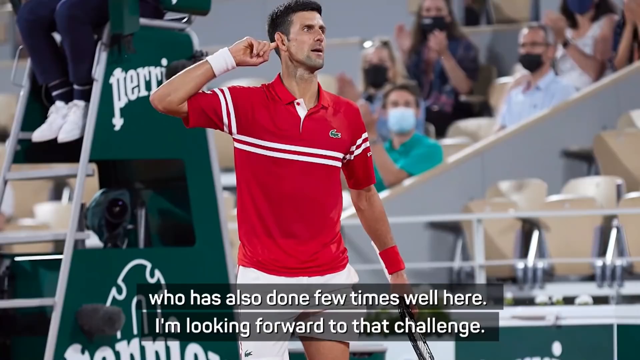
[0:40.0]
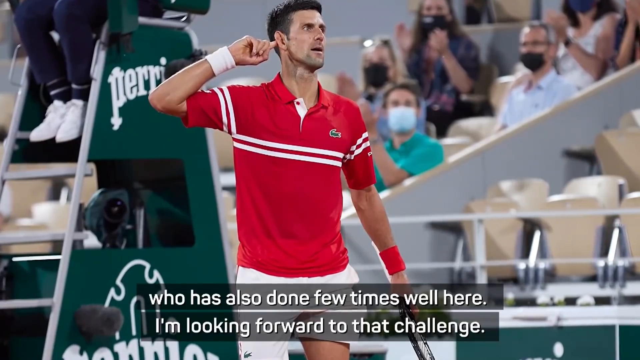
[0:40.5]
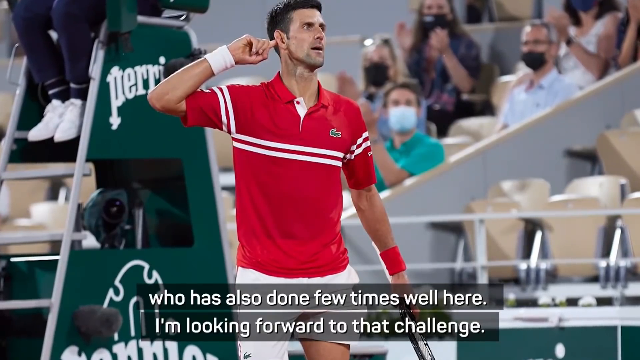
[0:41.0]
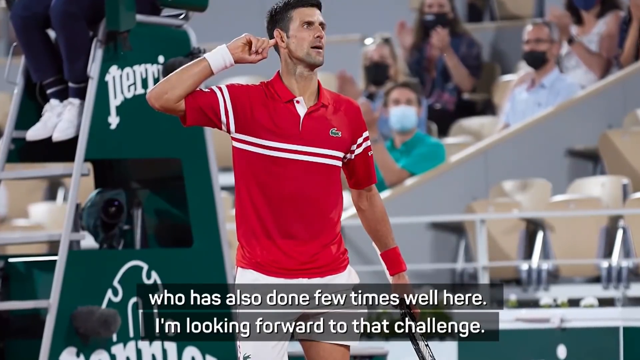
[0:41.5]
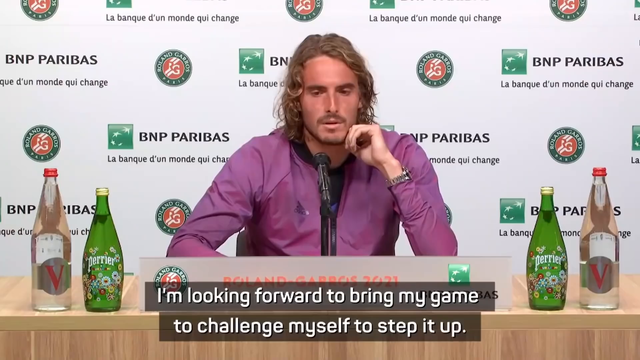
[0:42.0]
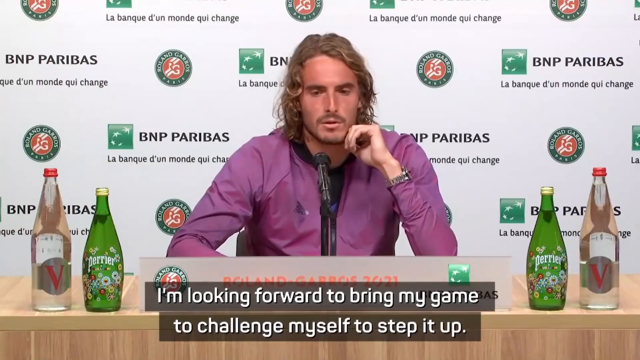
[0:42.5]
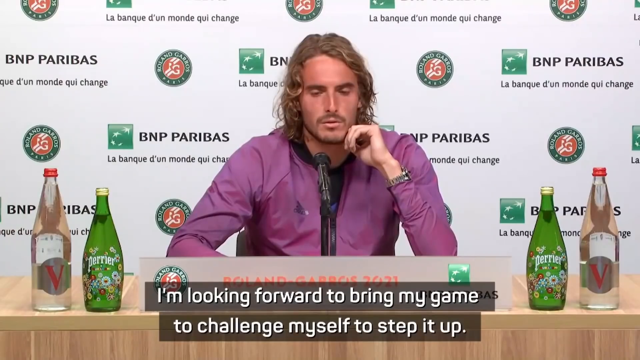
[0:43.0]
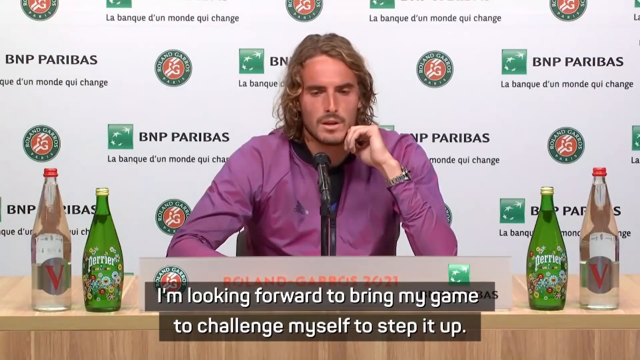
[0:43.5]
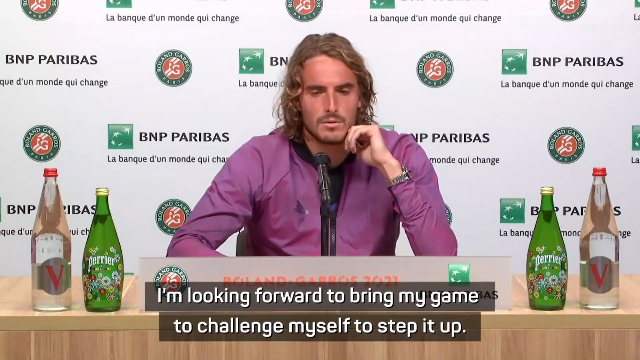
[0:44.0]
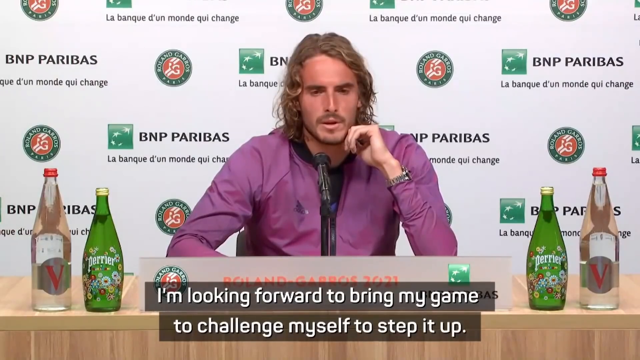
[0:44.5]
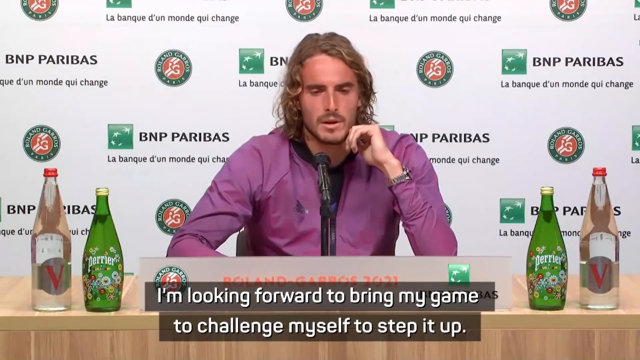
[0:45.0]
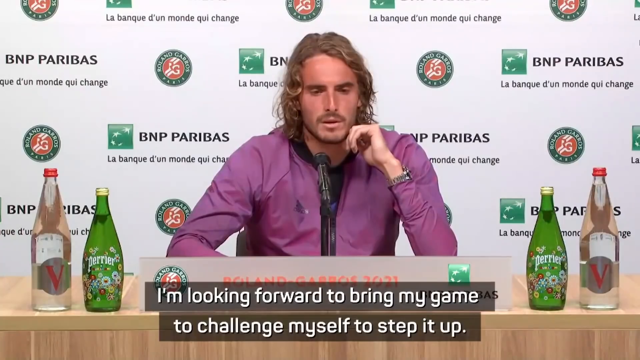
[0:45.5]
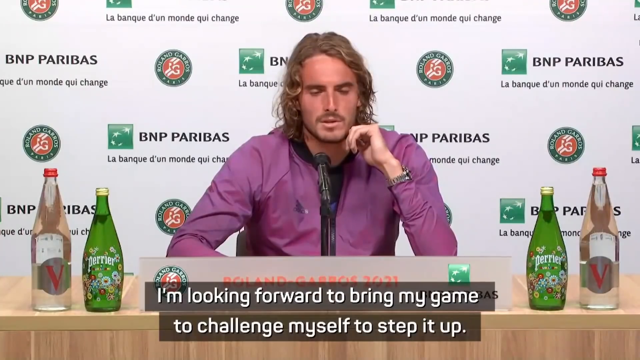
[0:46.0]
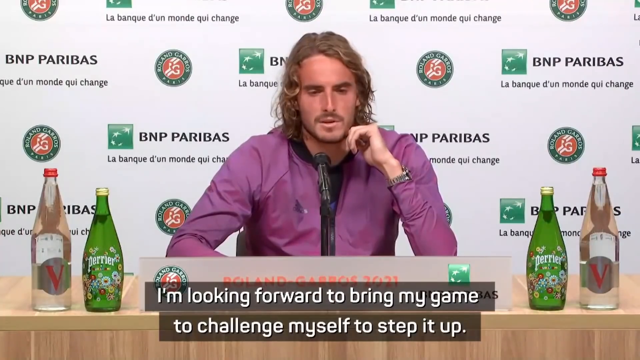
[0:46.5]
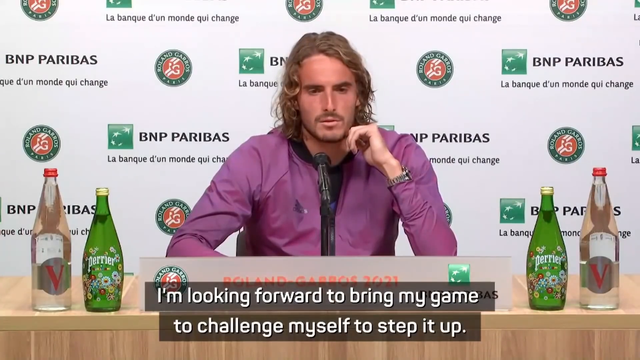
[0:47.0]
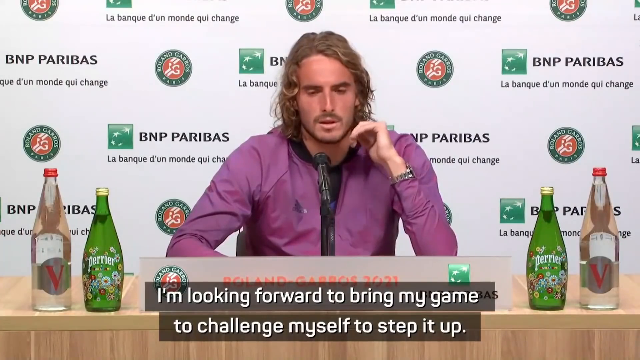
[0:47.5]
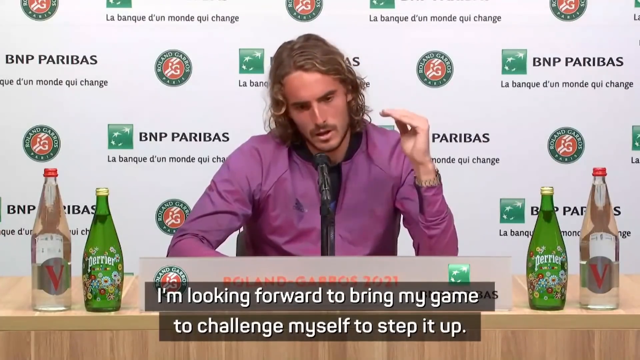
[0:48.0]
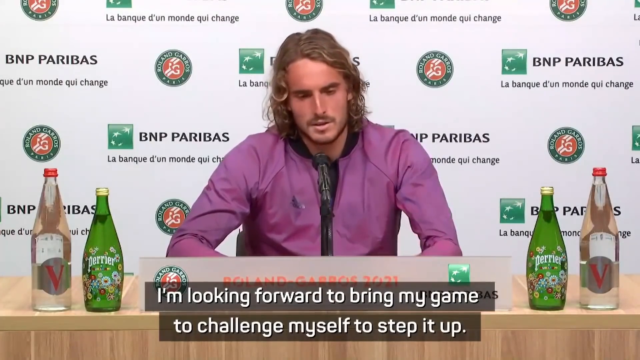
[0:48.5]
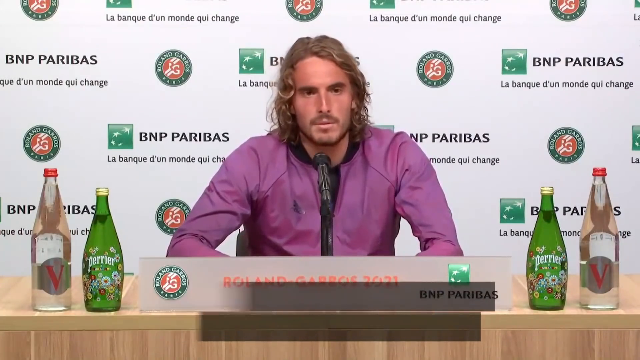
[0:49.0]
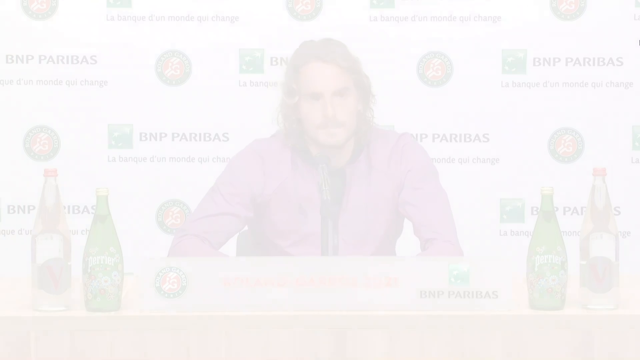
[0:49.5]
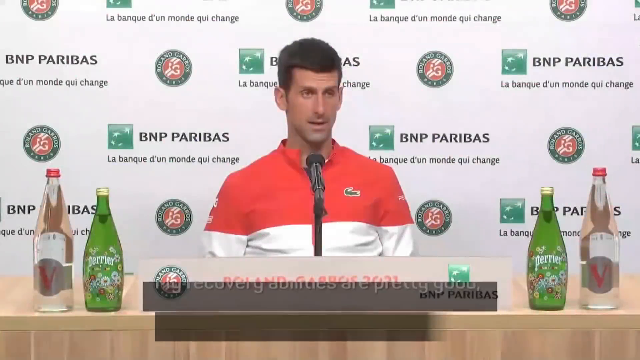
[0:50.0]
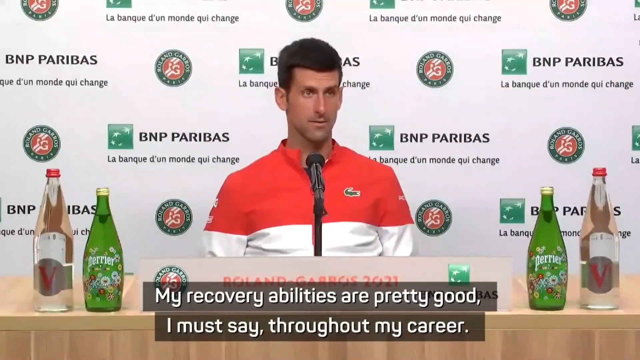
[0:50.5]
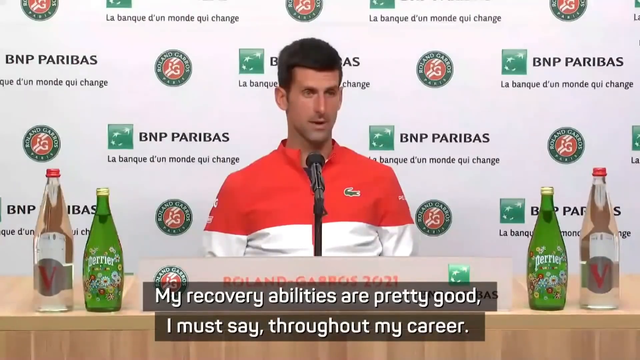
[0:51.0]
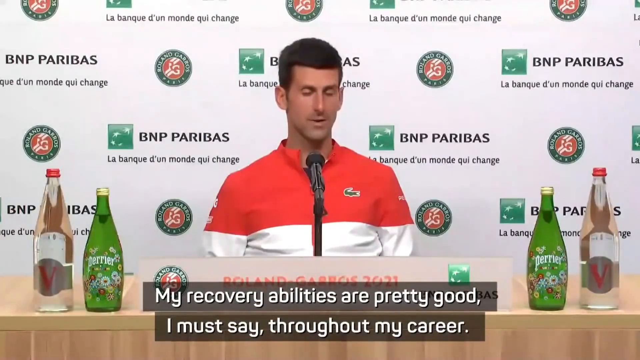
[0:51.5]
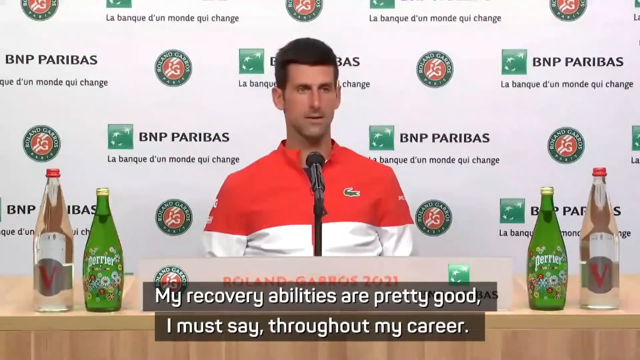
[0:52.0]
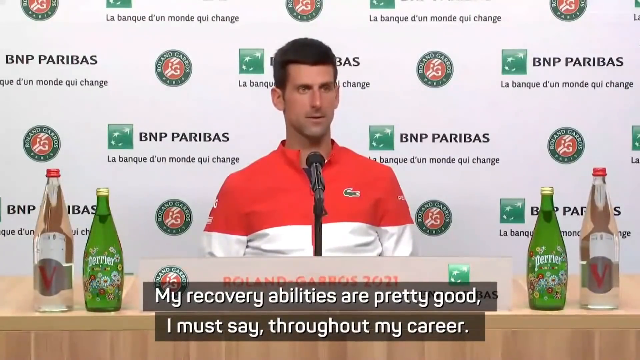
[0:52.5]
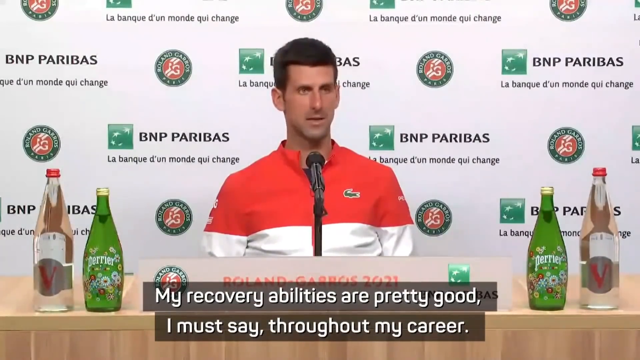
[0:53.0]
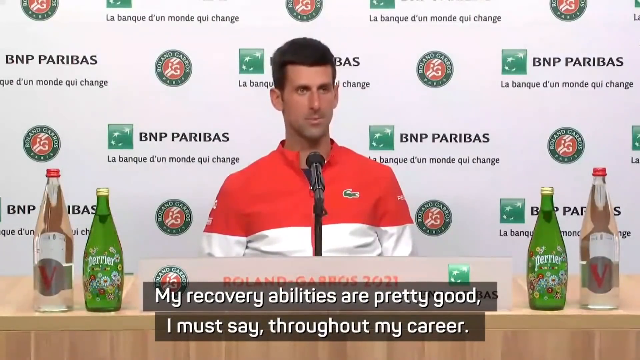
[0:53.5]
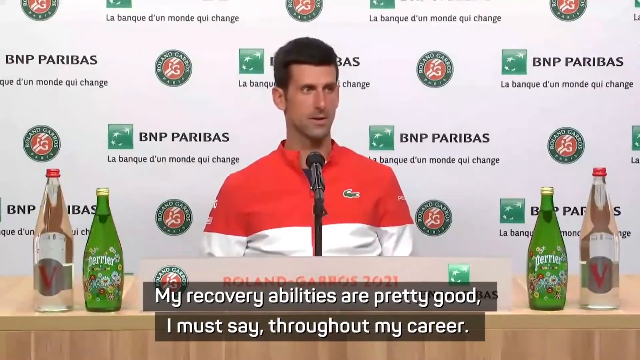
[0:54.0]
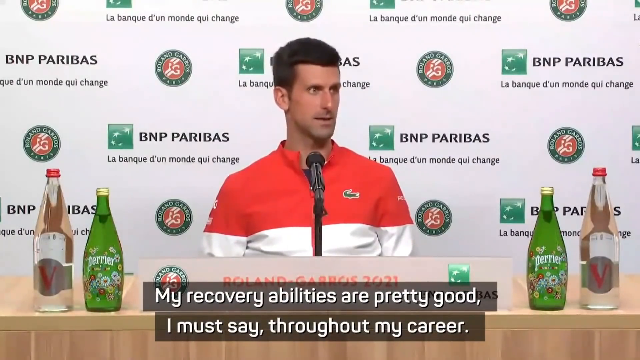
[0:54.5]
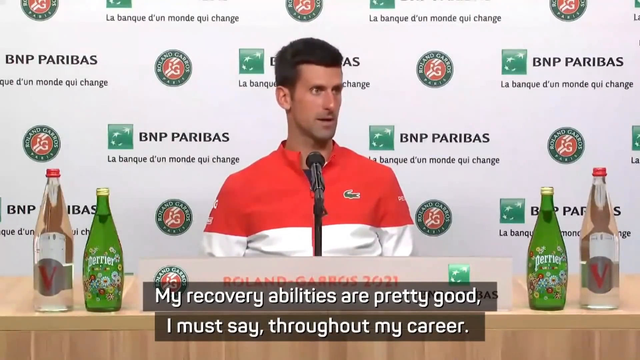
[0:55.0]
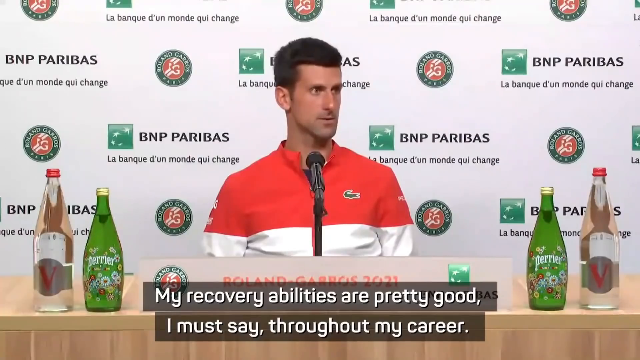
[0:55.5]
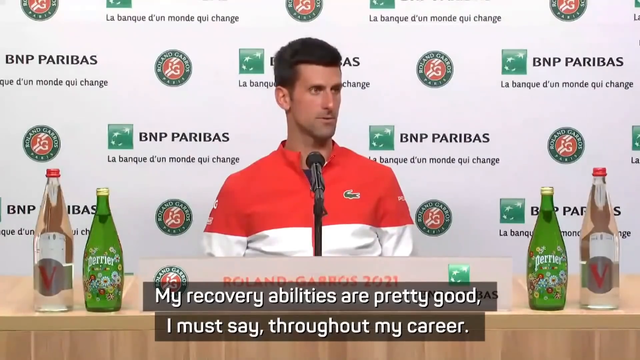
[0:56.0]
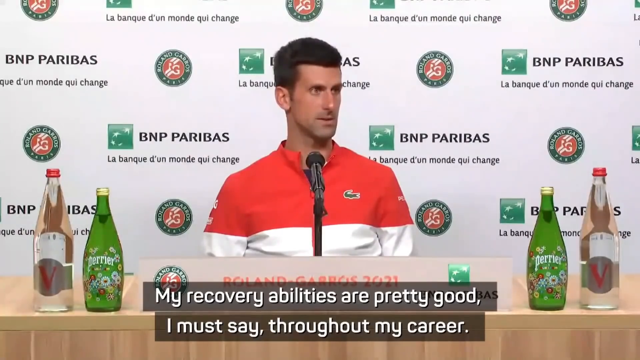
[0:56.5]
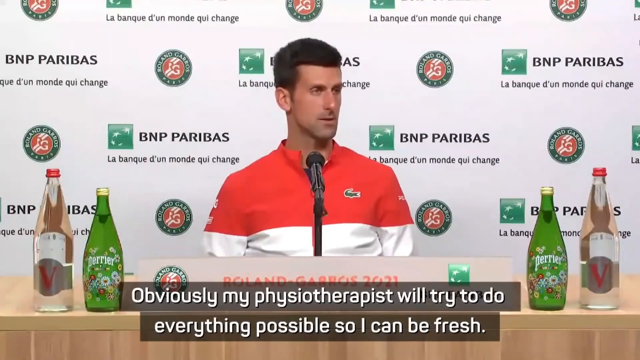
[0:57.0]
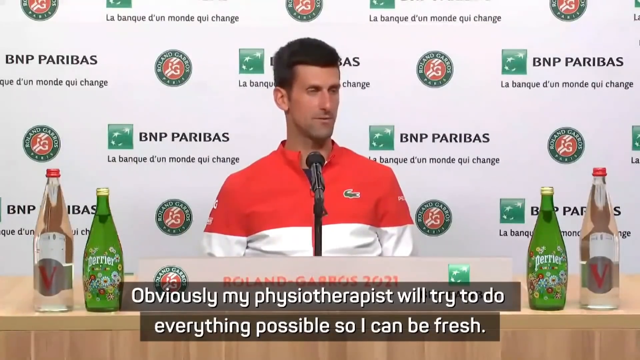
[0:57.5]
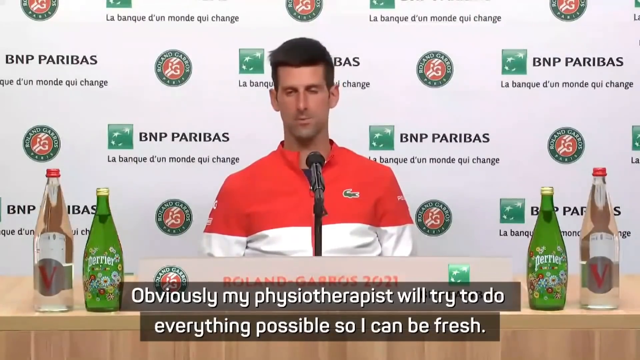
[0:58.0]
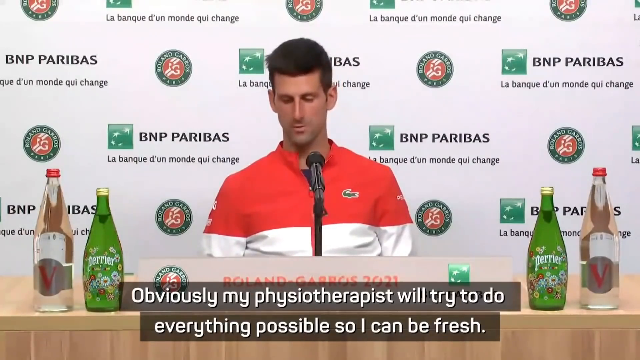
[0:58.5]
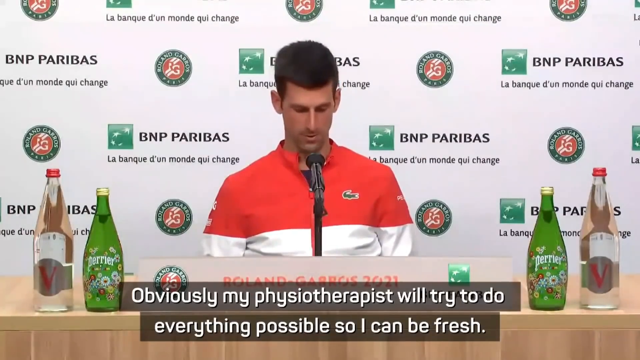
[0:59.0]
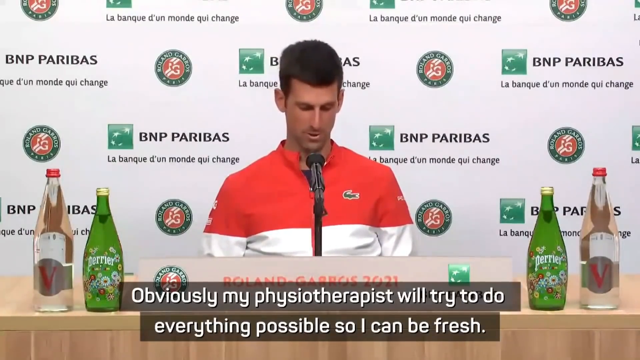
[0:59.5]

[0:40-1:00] The man in the purple shirt is shown again speaking. He appears to be looking down and appears to have a very neutral, perhaps slightly solemn expression. He moves his left arm from his jaw onto the table. Then the image fades away and is replaced by the other player, the one in the sort of red and white shirt. It appears that neither of his arms is on the table, or maybe he is just leaning back a little farther. He looks out into the crowd as he speaks, looking toward the crowd on his left side and then kind of looking down. The table in front of the players appears to be a light-colored wood, and the bottles on the table appear to be Perrier in green bottles, along with something else in a more clear bottle.